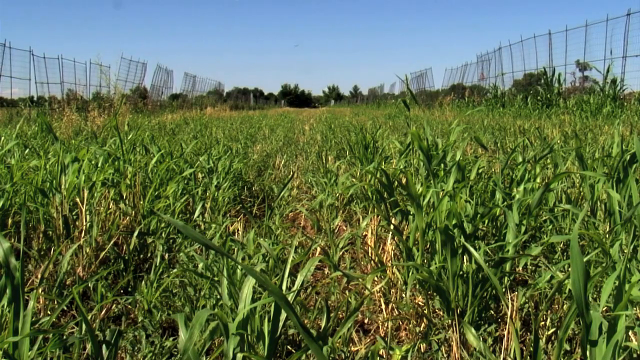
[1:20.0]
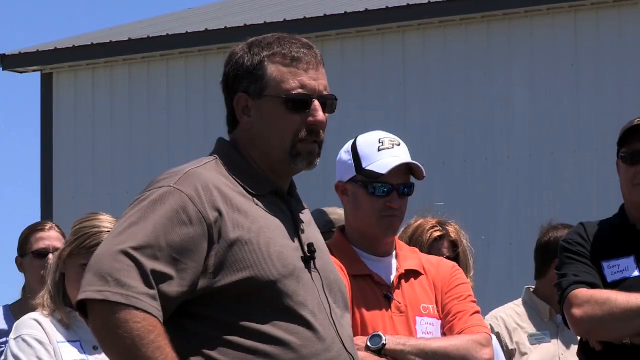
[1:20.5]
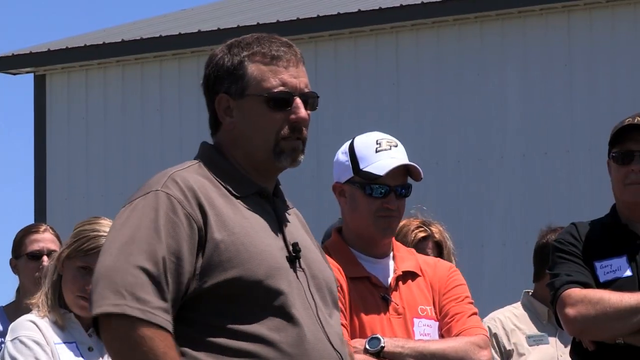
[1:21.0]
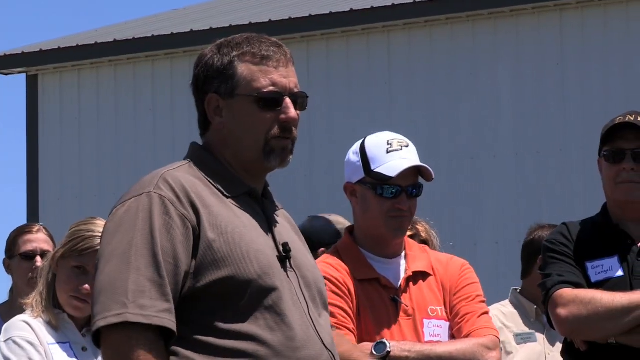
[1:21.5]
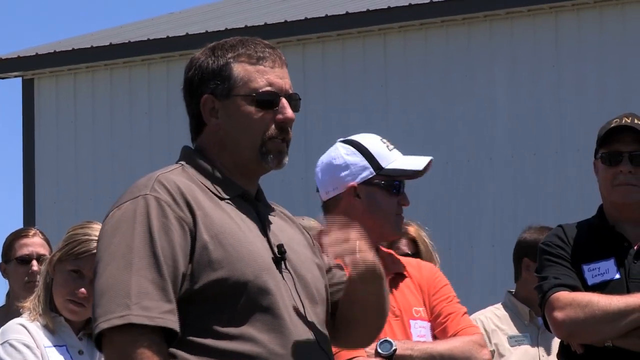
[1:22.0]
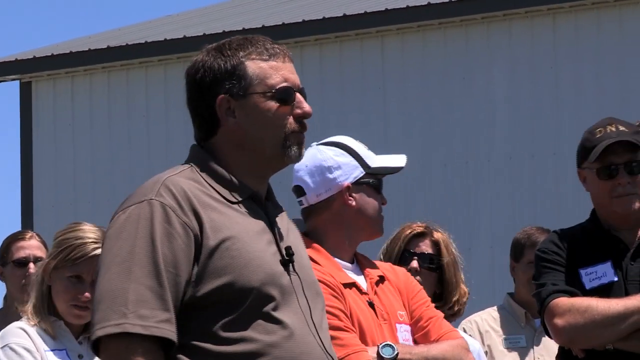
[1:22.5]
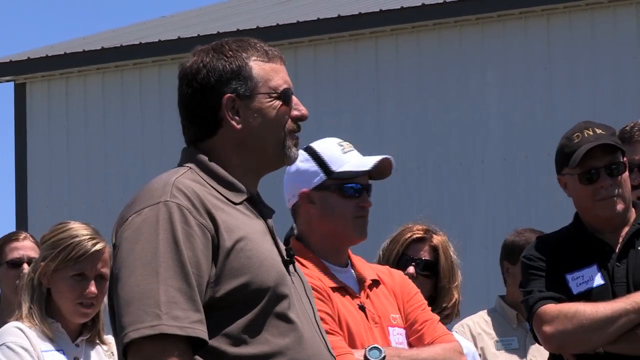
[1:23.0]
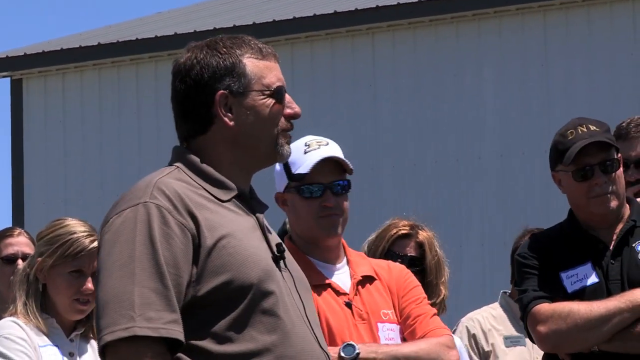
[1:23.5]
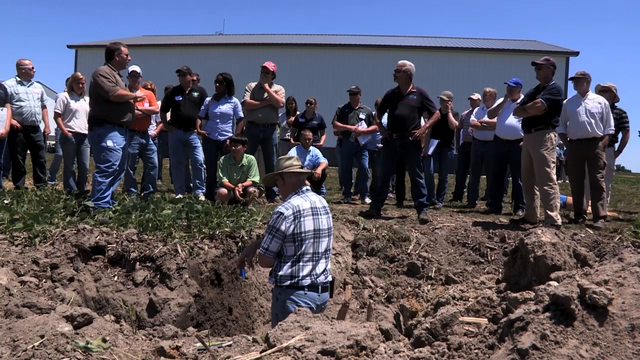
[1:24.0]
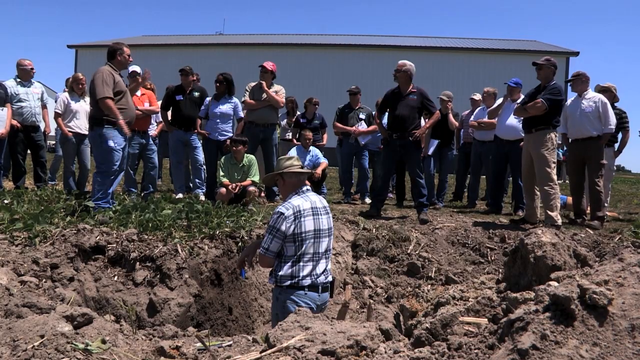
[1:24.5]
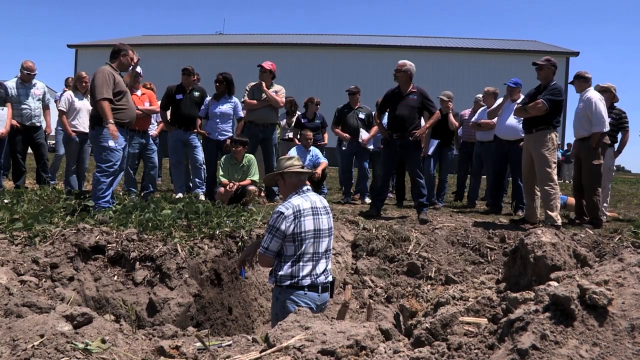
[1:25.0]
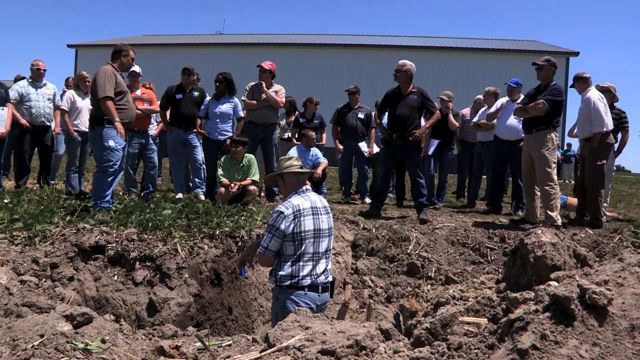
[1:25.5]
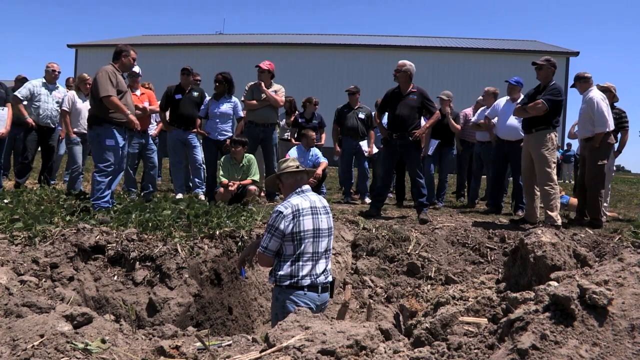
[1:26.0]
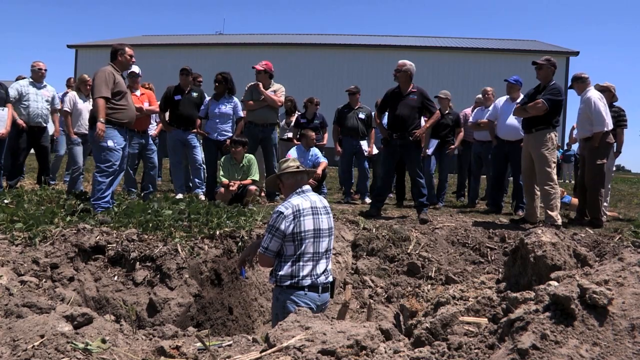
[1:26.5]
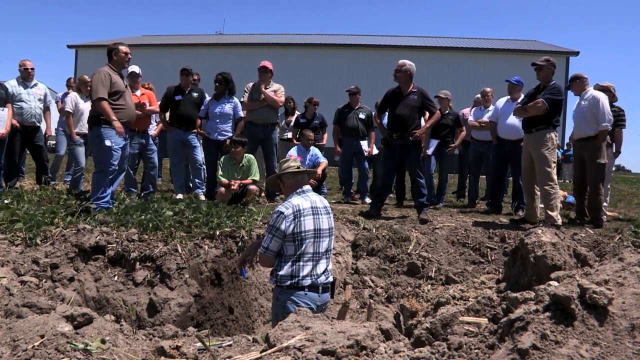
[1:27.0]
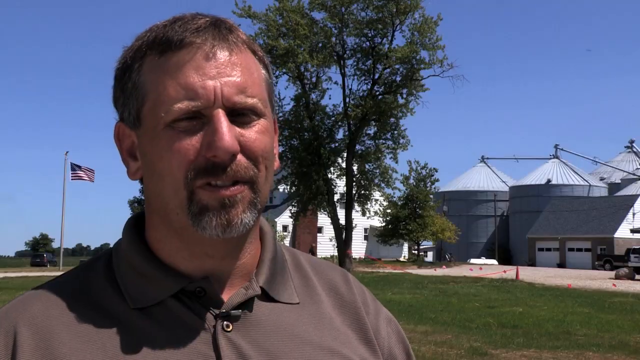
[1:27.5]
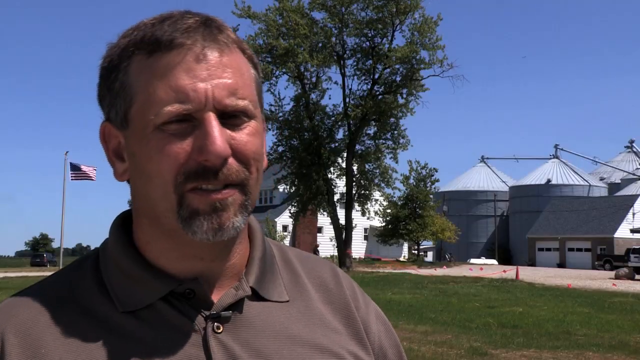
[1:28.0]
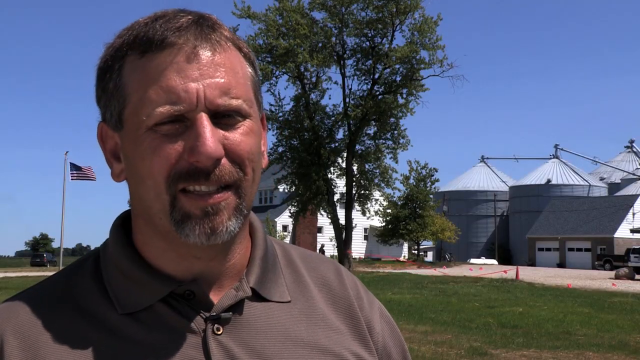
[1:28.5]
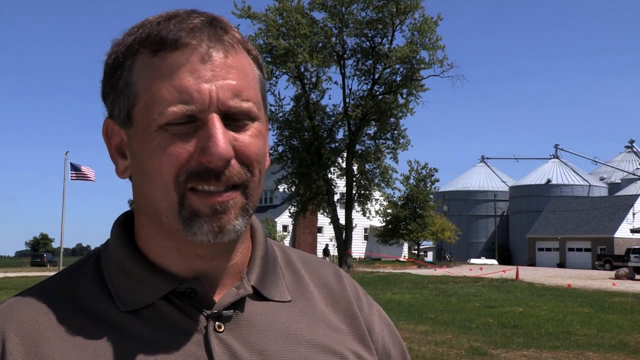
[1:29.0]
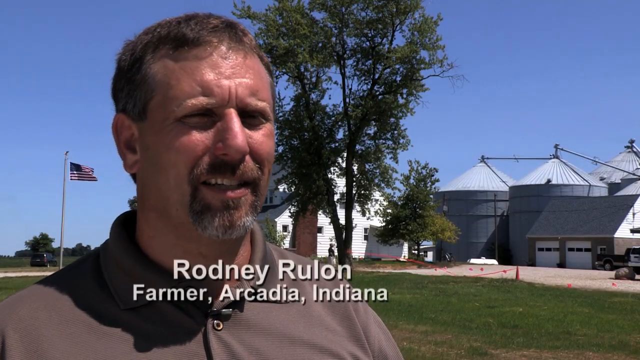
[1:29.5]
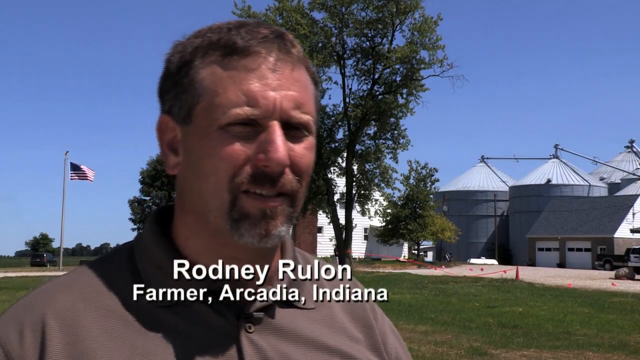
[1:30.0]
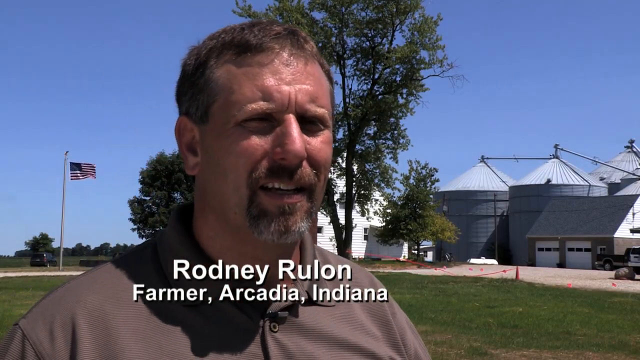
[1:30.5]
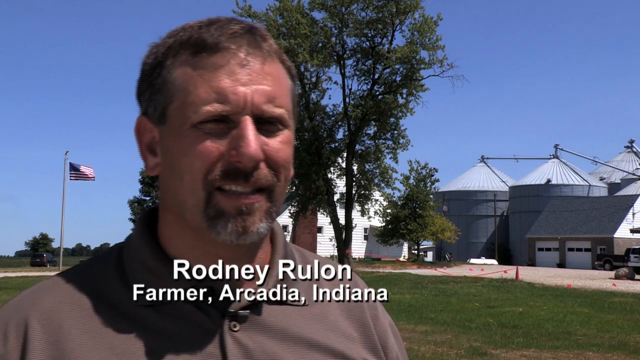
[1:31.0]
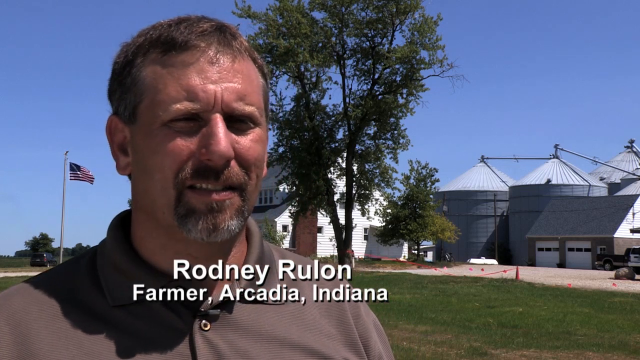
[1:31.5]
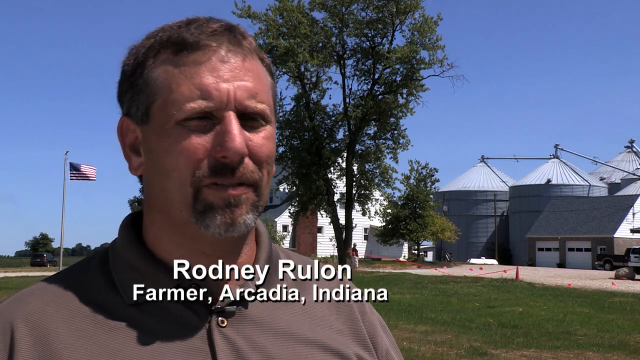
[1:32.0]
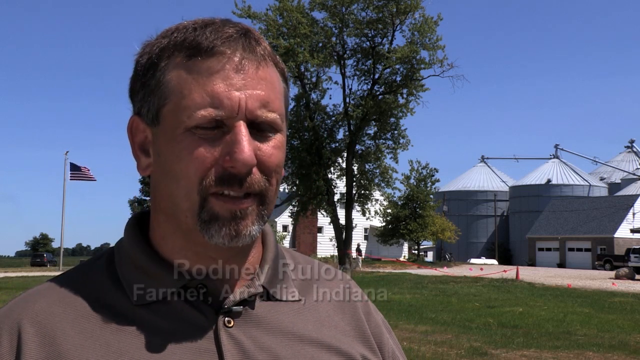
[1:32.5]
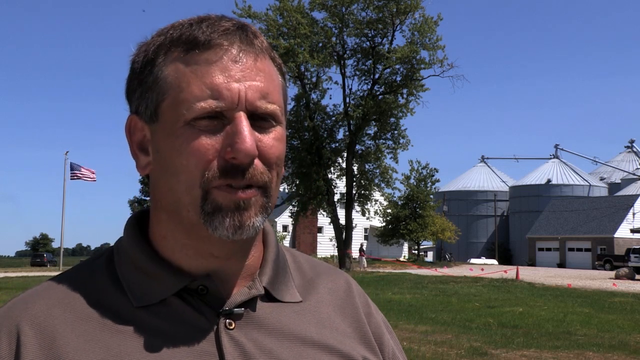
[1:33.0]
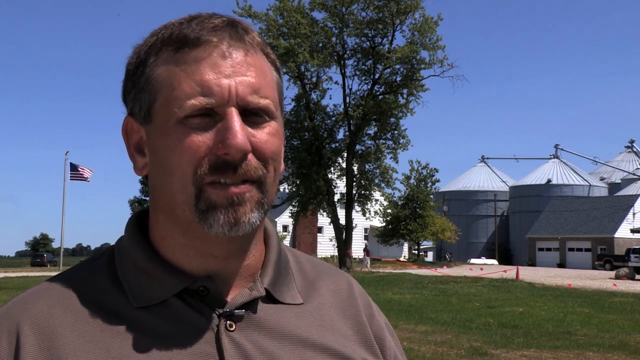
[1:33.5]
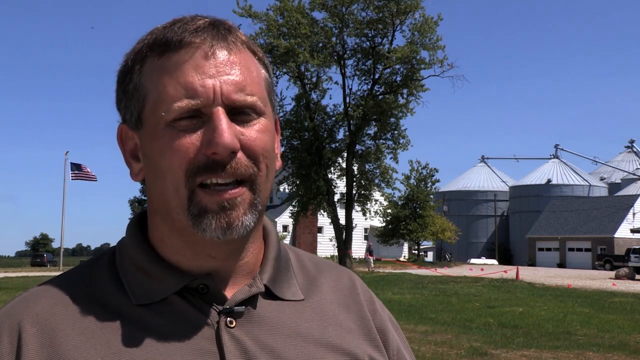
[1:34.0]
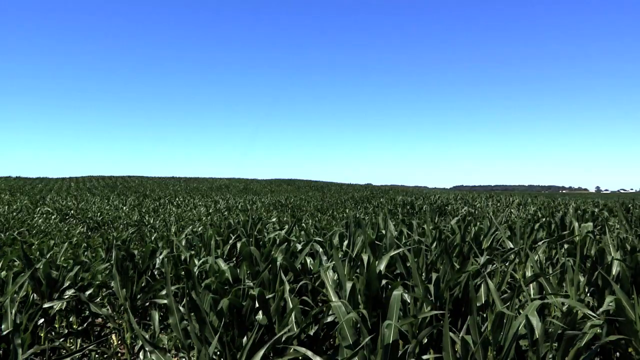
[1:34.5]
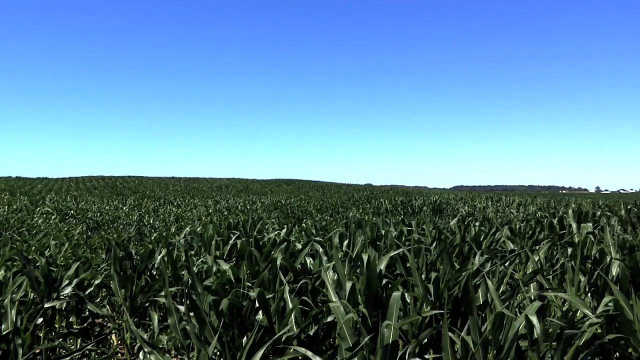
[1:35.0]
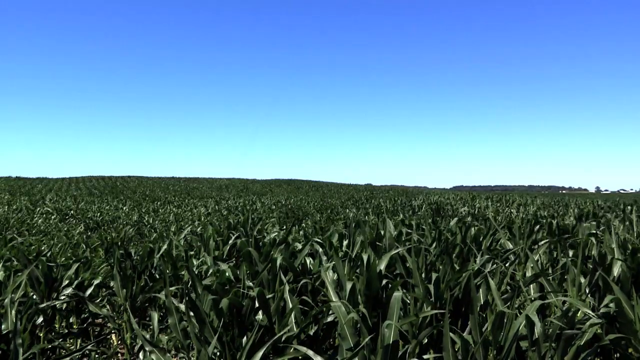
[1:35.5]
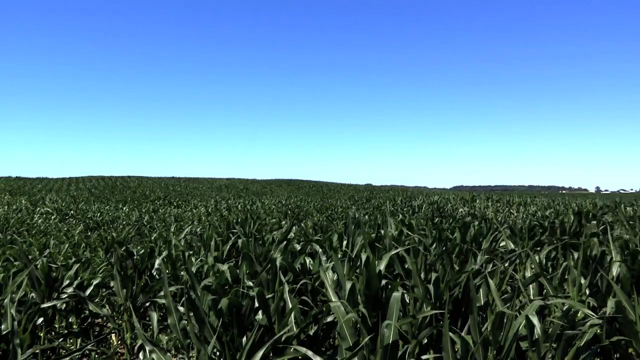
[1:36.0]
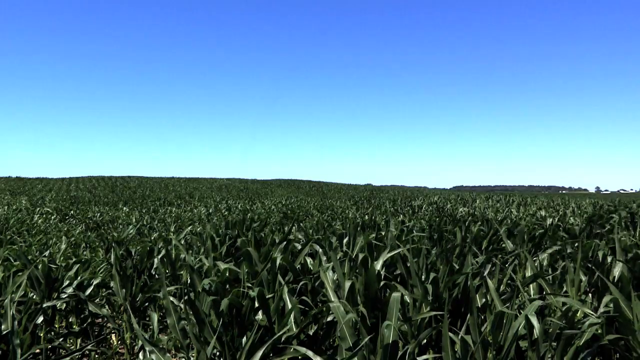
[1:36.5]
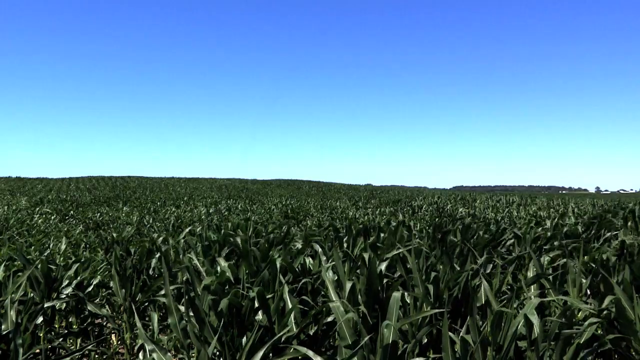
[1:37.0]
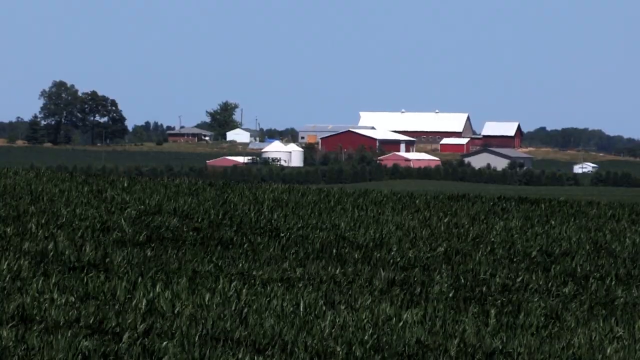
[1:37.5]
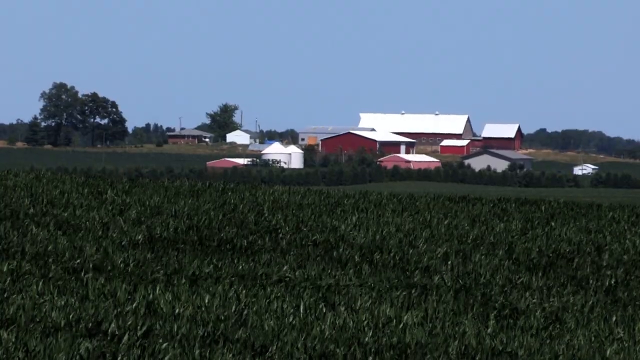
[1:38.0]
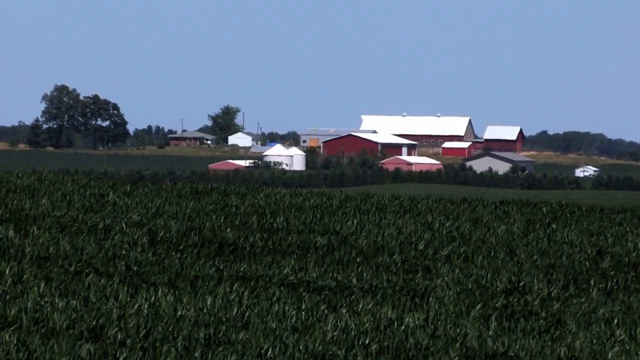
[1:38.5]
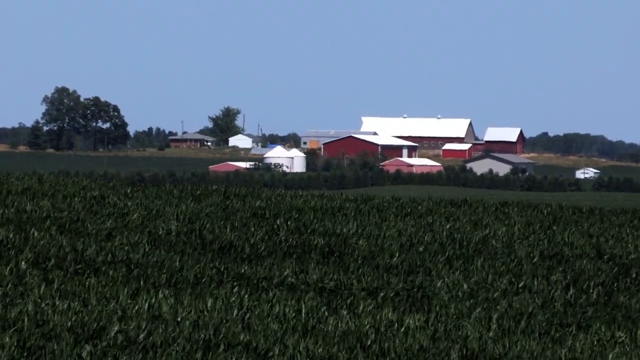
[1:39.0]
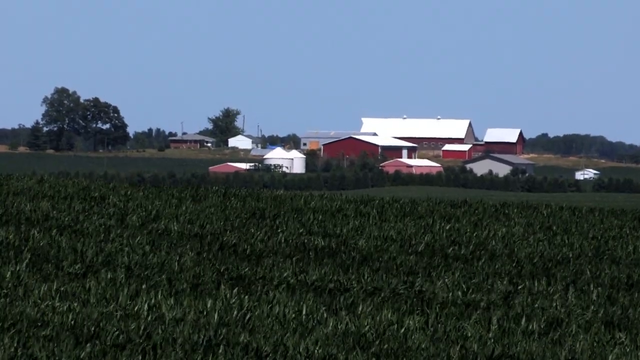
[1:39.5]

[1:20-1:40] Several people are on screen, listening to a person in dark glasses talking; another person wears a white cap and also dark glasses. A group of people is gathered in the middle of the plantation, watching a man down in a hole in the ground, moving and talking; they all seem to be paying attention to him. He is identified as Rodney Rulon, an Indian Arcadia farmer. At the bottom of the screen there is a mast with the United States flag, and United States flags are visible in many places. On the right side of the screen is a facility where production is processed and stored. A zoom shows the plantations in the middle, very large, along with several houses.